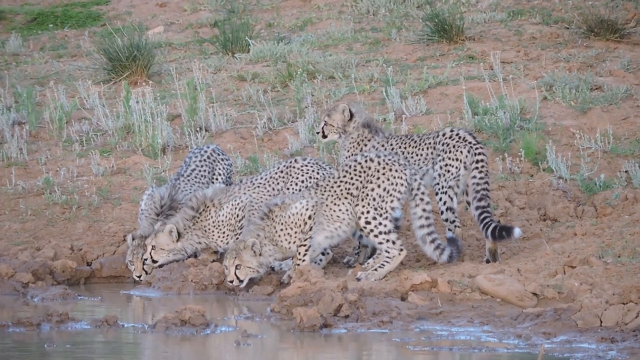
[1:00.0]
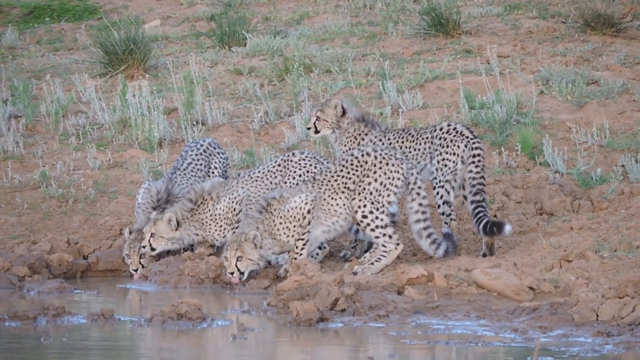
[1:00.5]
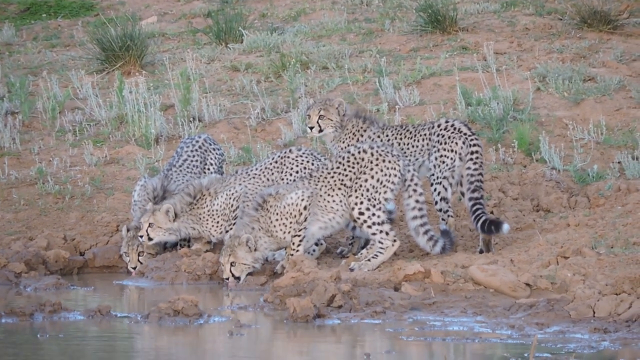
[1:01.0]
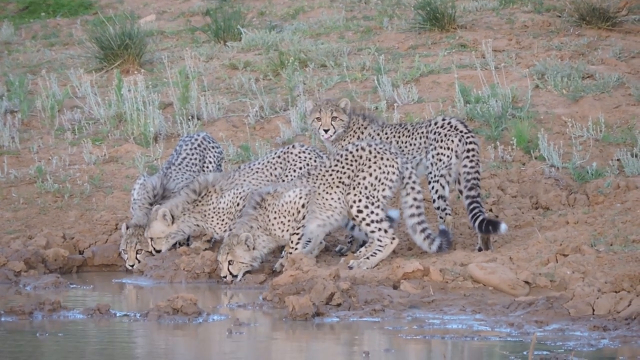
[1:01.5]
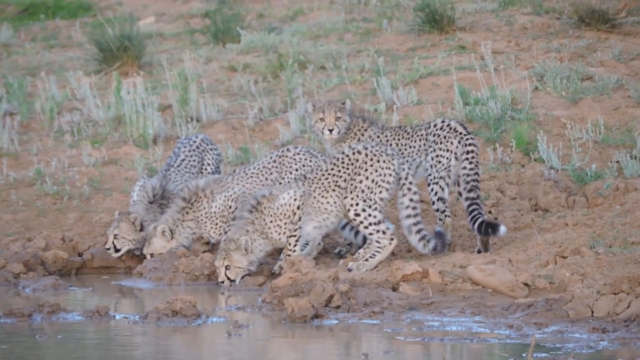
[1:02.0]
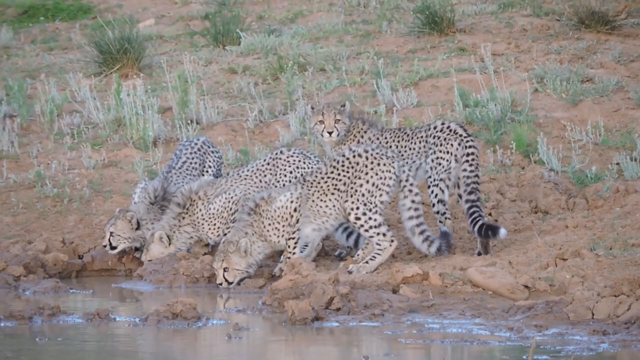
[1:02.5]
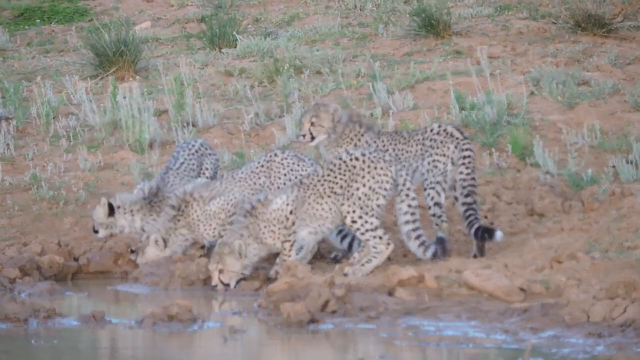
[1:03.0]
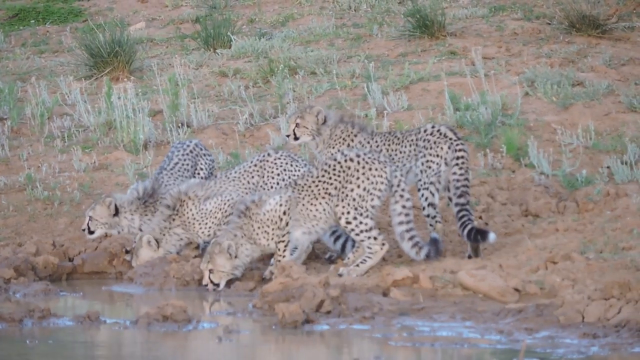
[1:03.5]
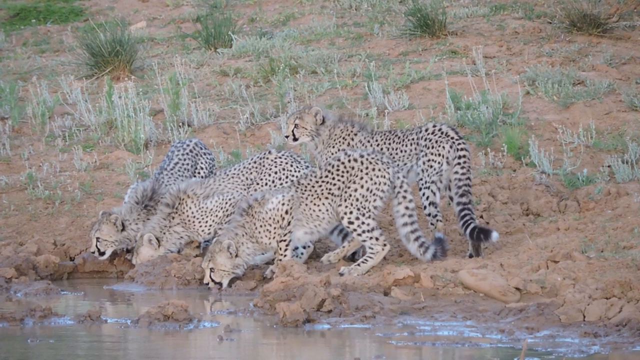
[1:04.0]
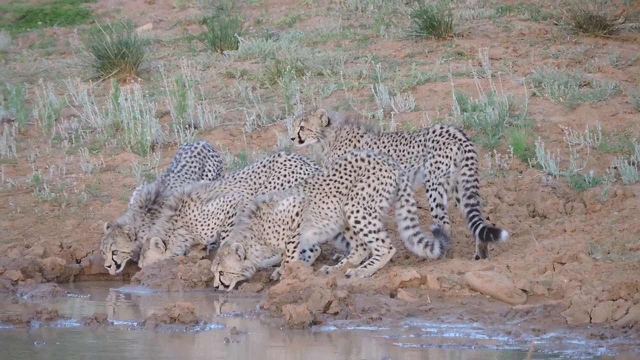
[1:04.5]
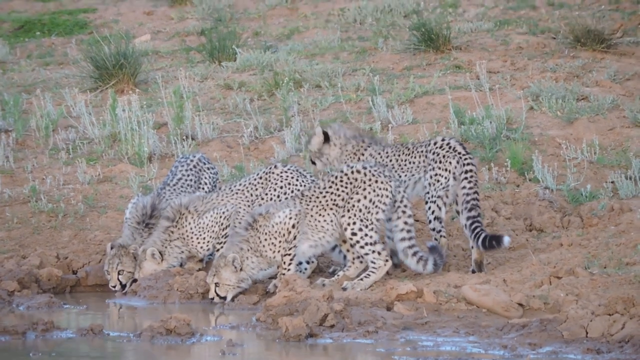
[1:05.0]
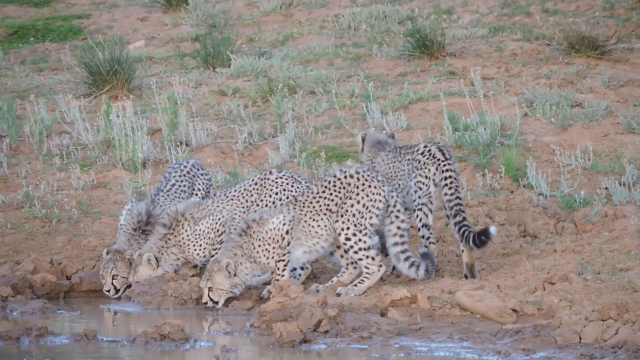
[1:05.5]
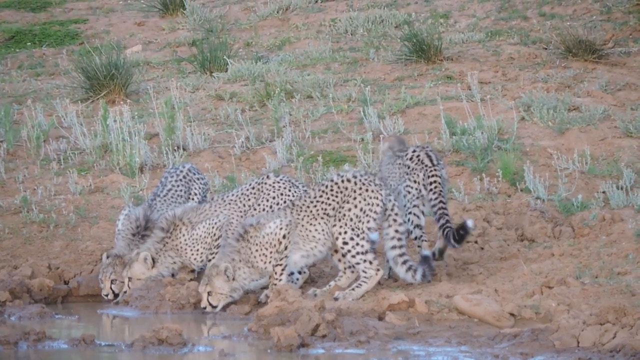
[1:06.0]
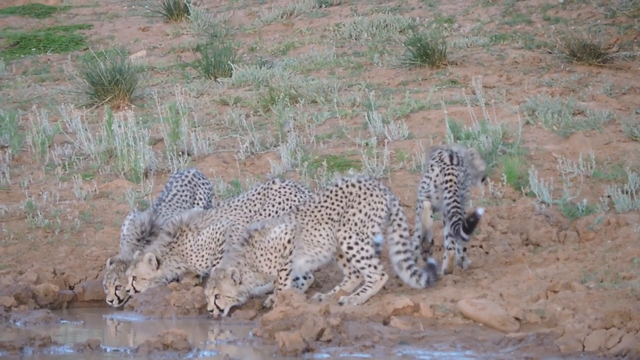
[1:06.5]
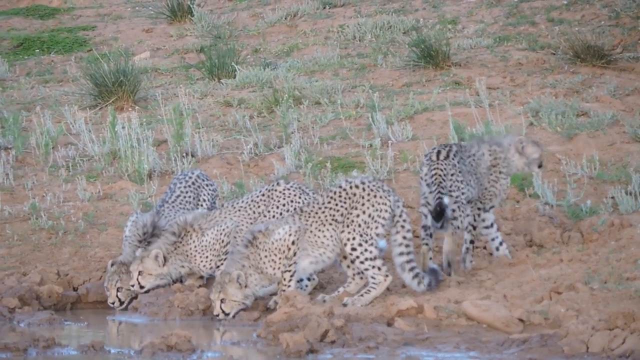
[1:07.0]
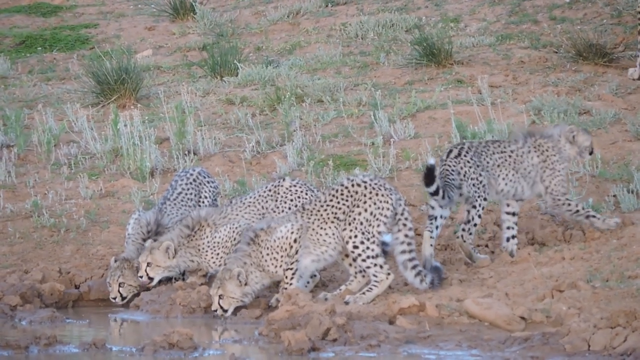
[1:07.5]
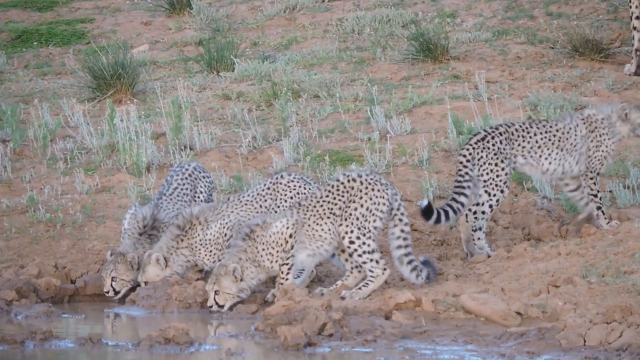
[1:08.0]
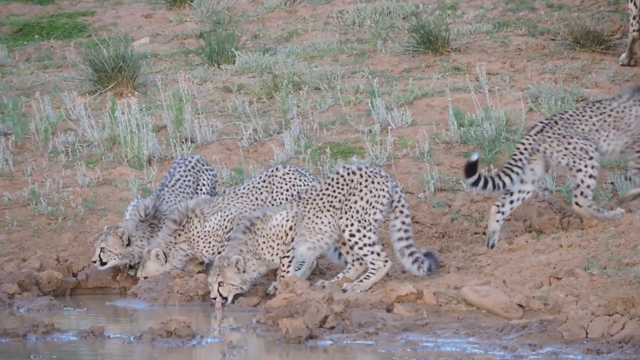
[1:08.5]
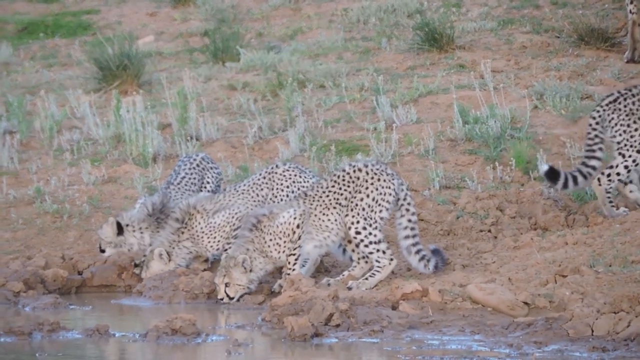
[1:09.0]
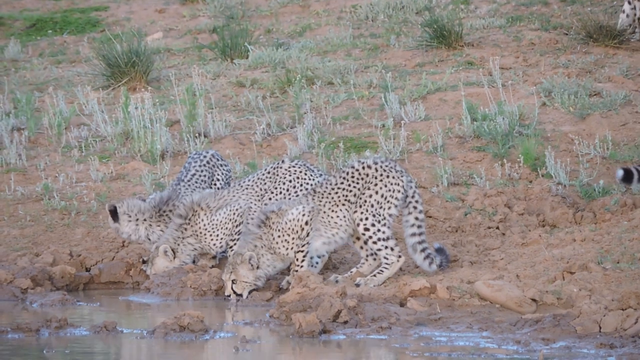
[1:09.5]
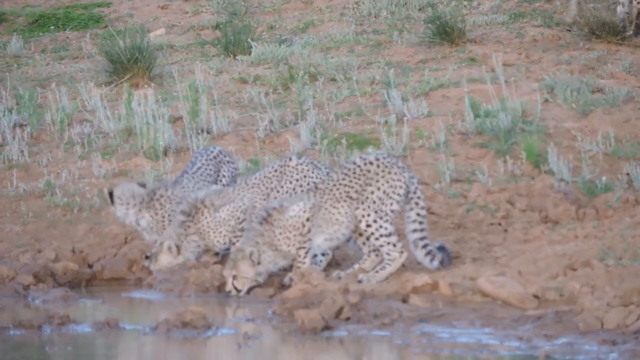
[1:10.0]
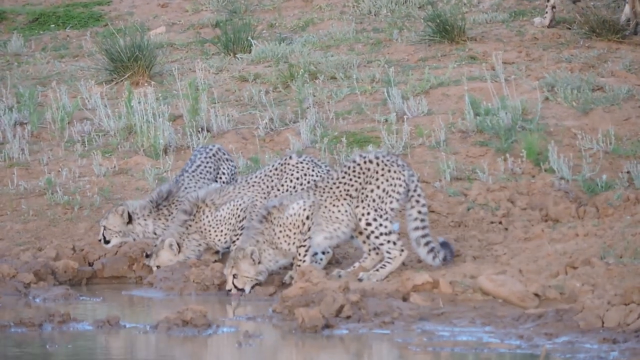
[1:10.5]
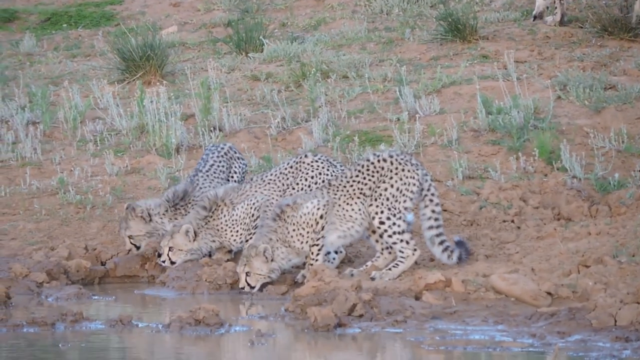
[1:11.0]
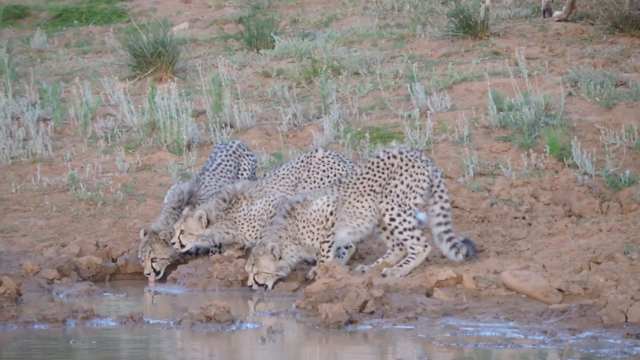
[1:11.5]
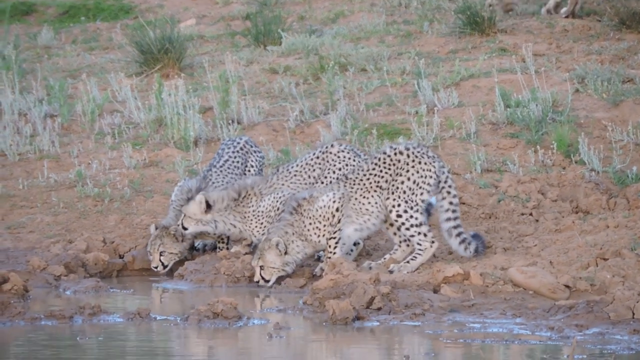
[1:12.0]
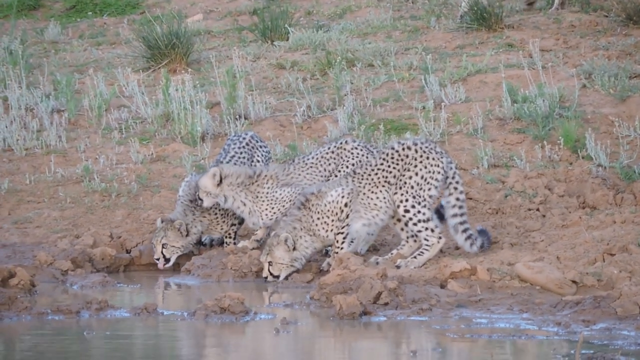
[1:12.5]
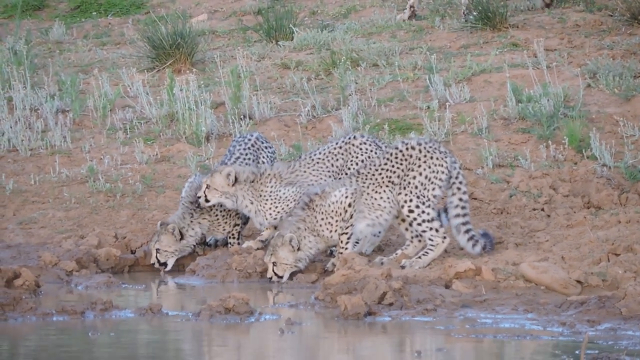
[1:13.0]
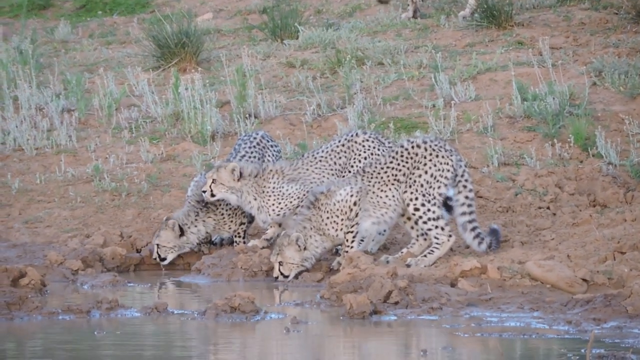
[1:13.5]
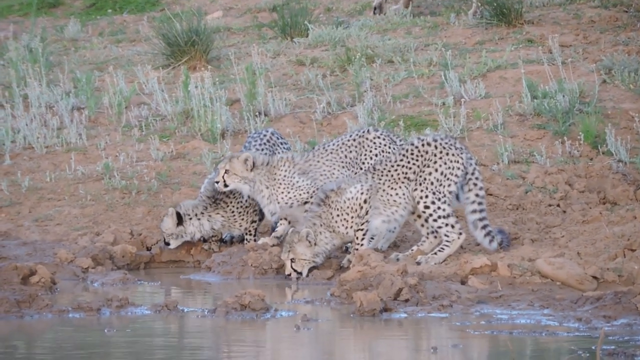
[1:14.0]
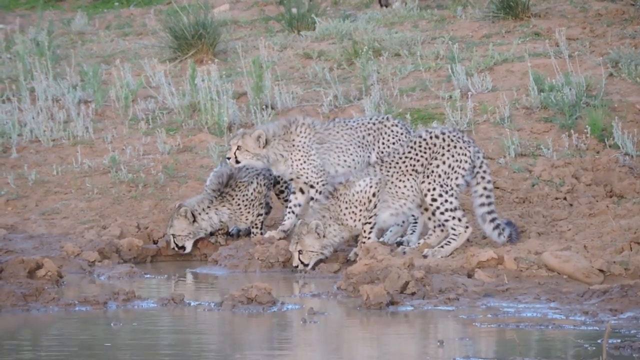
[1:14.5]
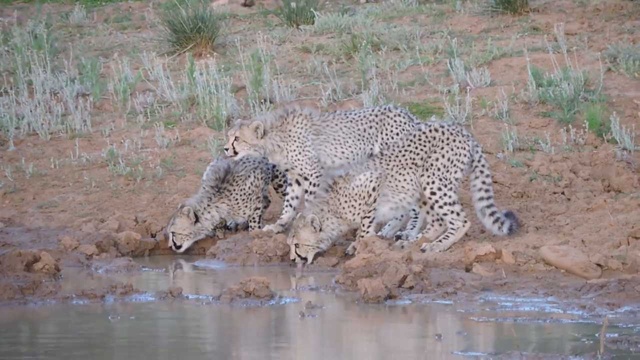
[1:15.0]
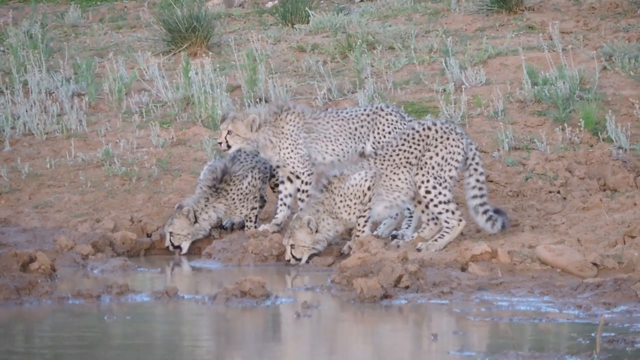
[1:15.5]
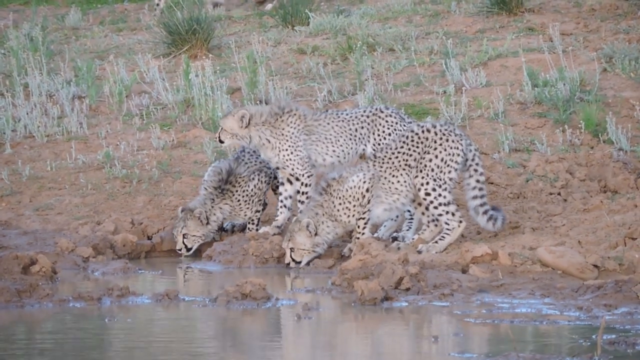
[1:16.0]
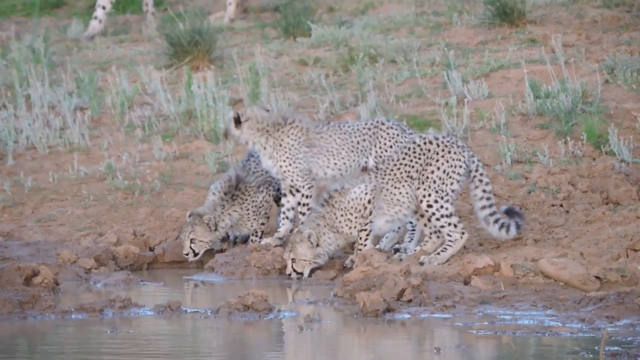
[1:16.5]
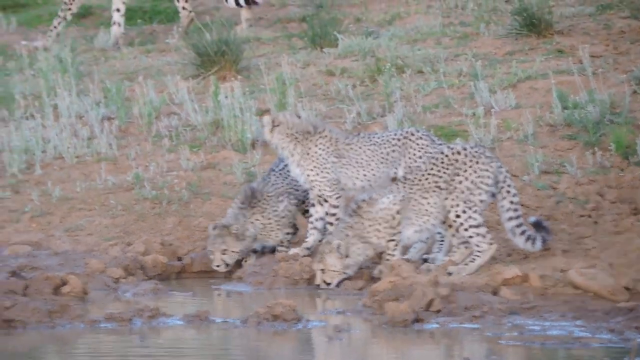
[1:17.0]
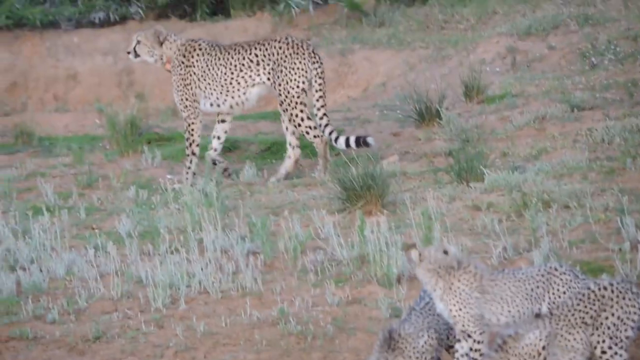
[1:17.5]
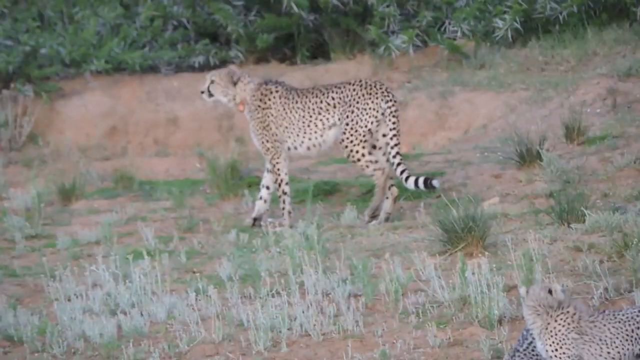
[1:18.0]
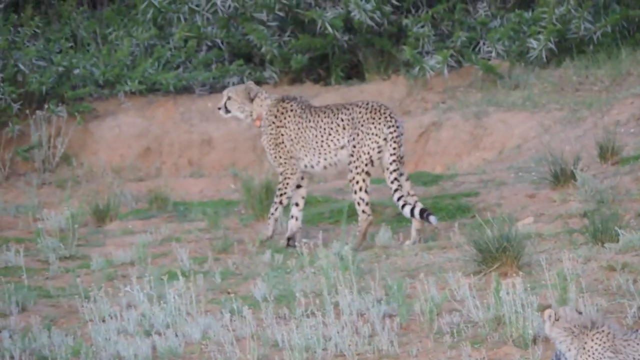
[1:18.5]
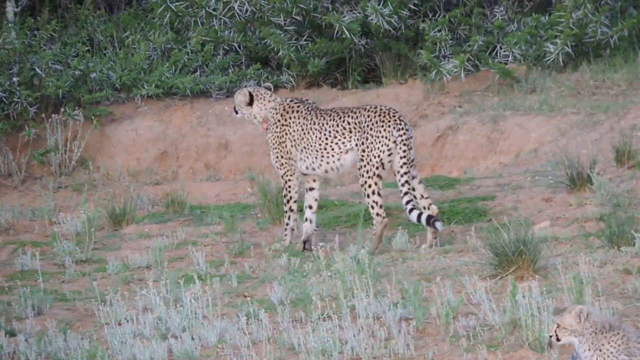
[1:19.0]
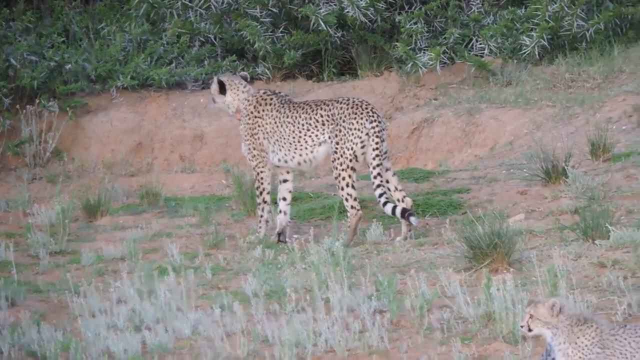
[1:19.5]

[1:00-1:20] The cubs are still on the lower left side, drinking, and one of them starts to walk off. They look around and walk off. Legs are visible in the upper right-hand corner, but the cubs keep drinking and looking towards the left side of the screen. The biggest one, which has something orange around its neck that looks like a tag but kind of like a collar, and which appears to be female, goes over to the section the cubs keep looking towards. It ends with her facing that direction, towards the left of the screen.